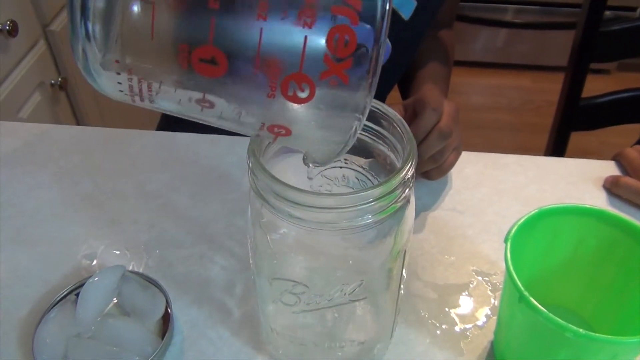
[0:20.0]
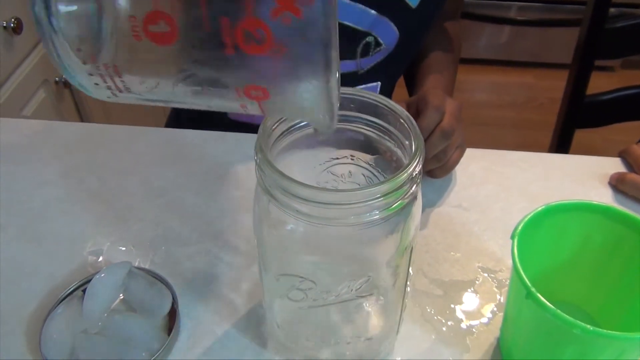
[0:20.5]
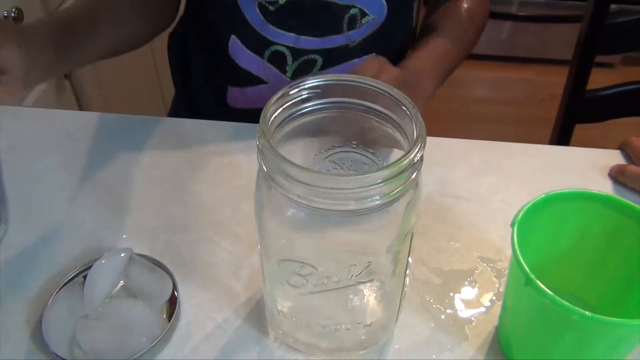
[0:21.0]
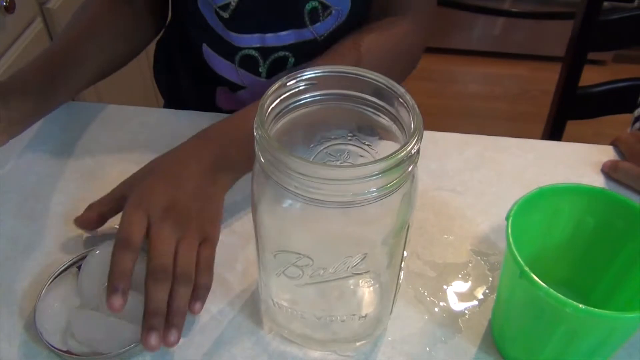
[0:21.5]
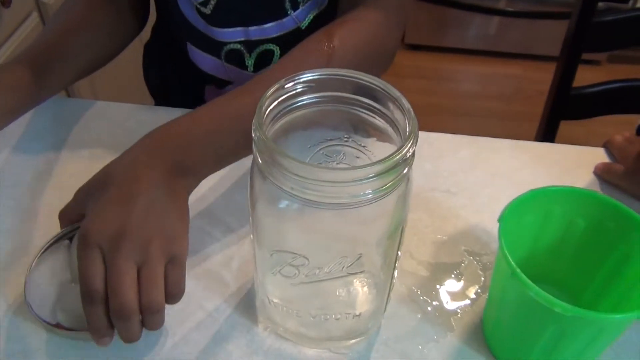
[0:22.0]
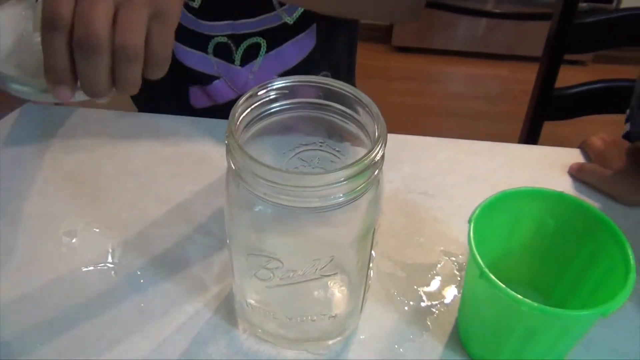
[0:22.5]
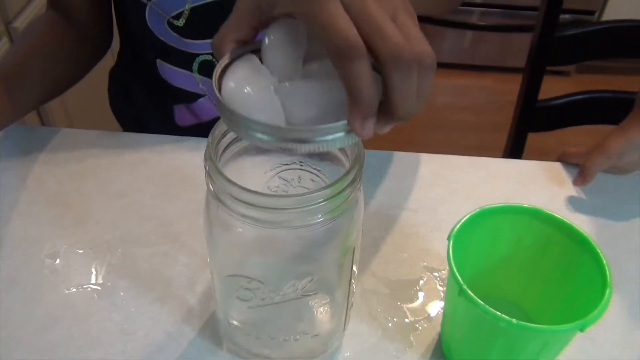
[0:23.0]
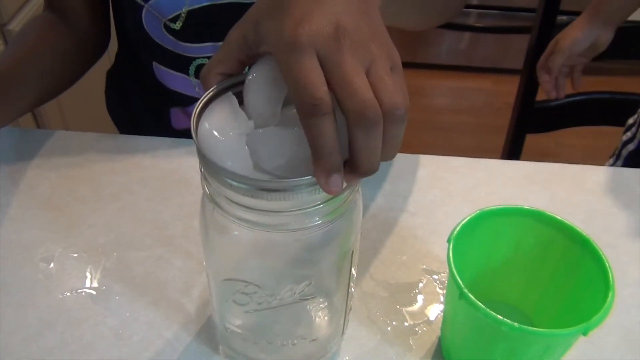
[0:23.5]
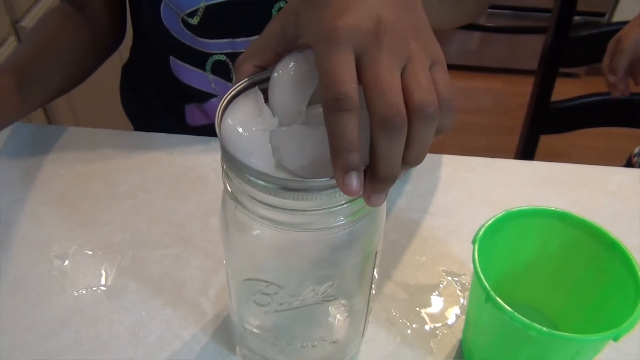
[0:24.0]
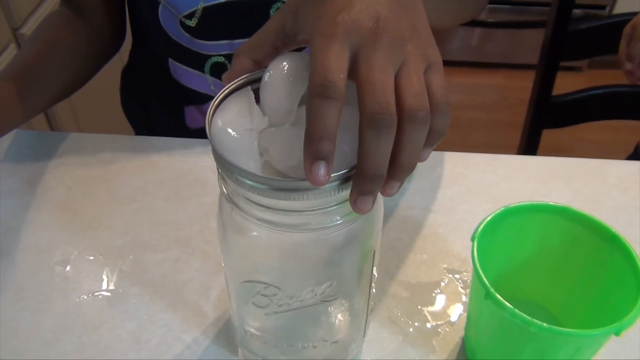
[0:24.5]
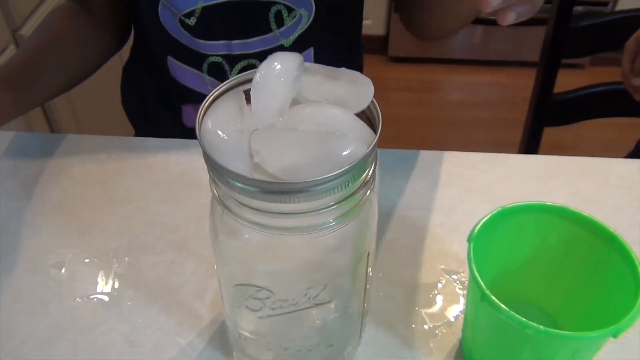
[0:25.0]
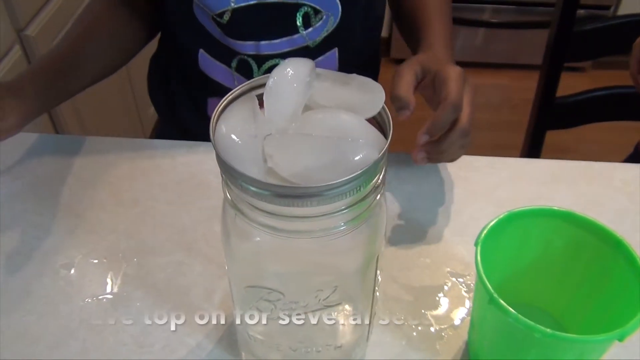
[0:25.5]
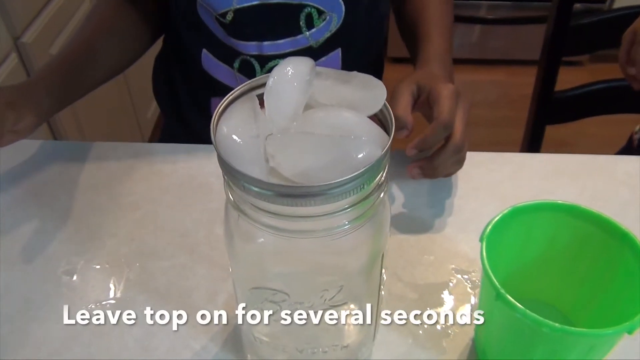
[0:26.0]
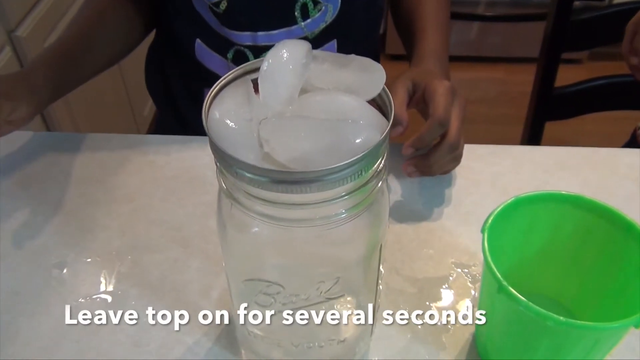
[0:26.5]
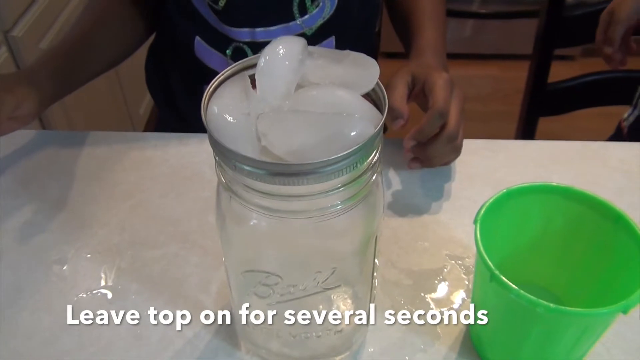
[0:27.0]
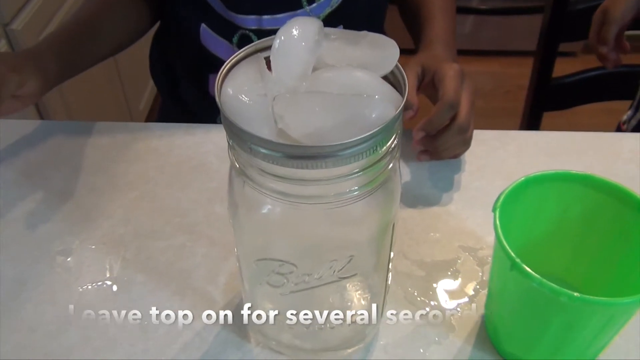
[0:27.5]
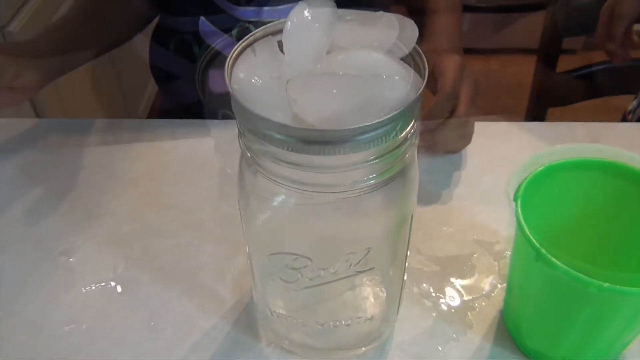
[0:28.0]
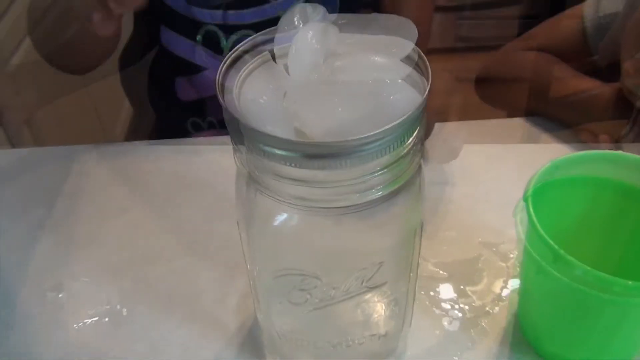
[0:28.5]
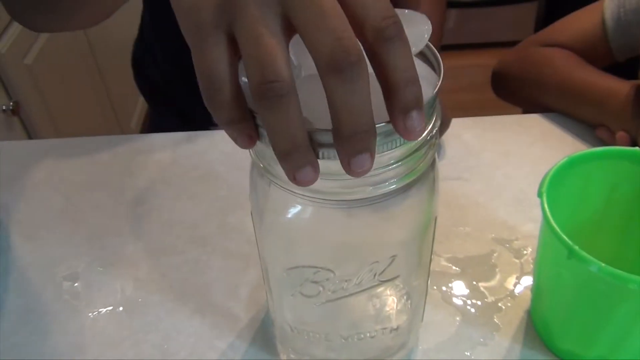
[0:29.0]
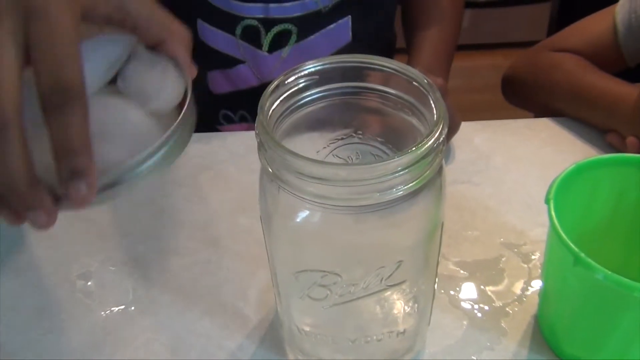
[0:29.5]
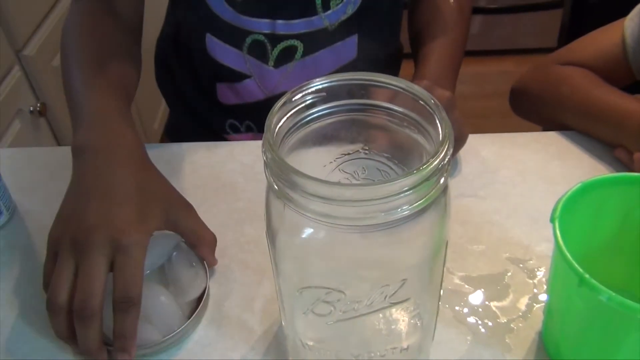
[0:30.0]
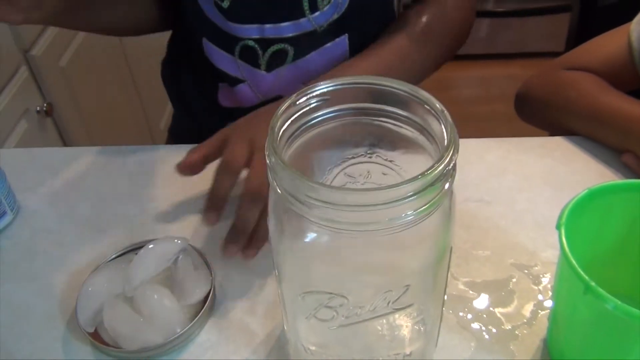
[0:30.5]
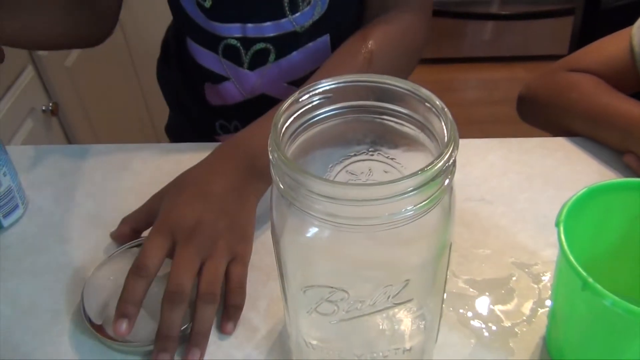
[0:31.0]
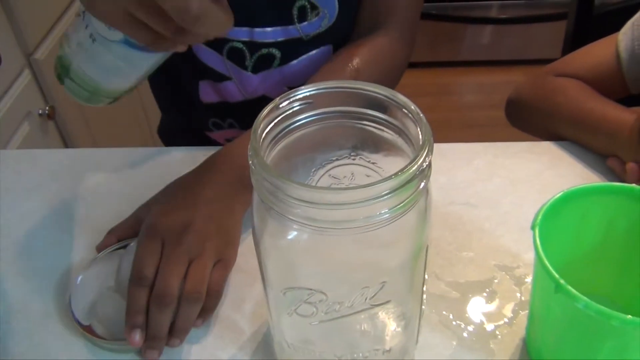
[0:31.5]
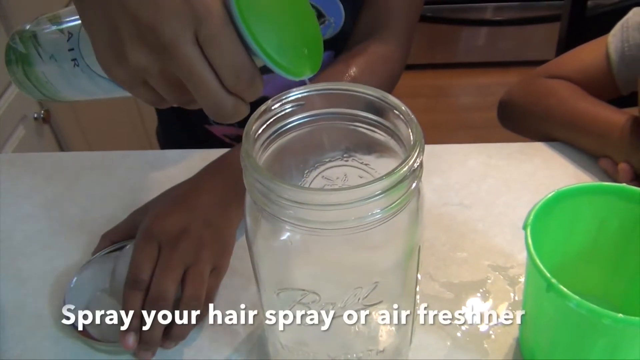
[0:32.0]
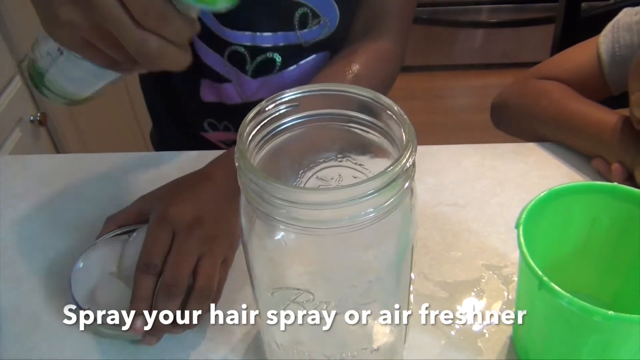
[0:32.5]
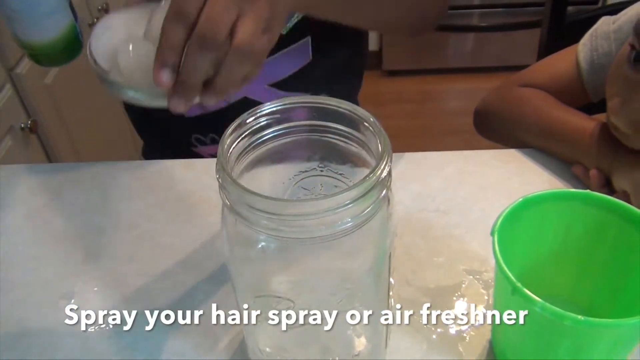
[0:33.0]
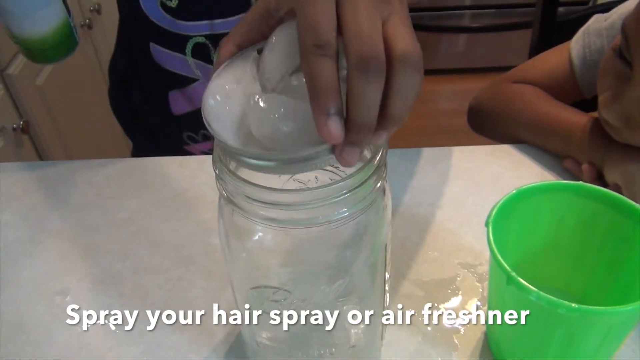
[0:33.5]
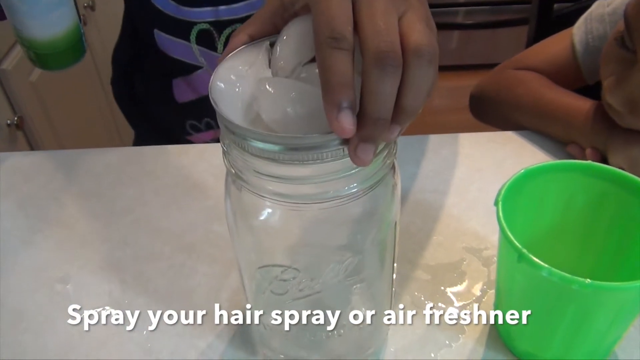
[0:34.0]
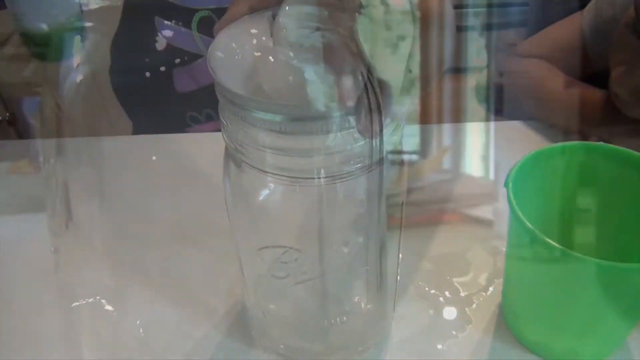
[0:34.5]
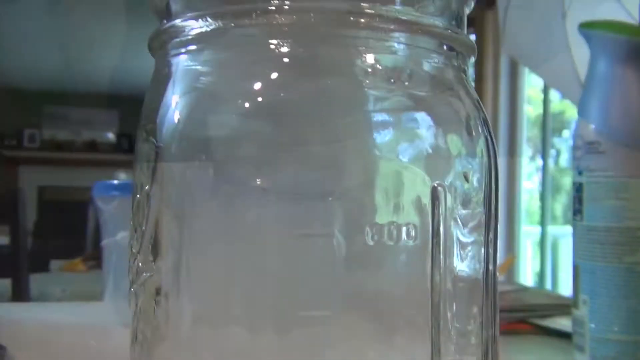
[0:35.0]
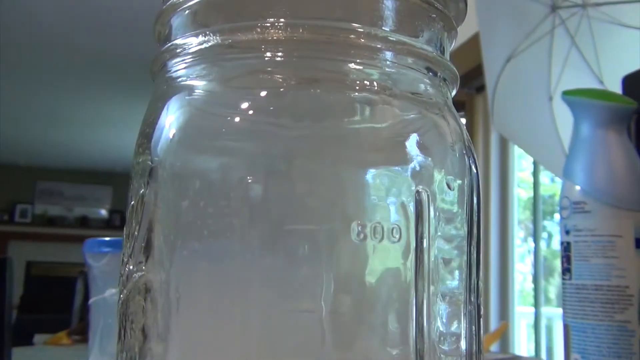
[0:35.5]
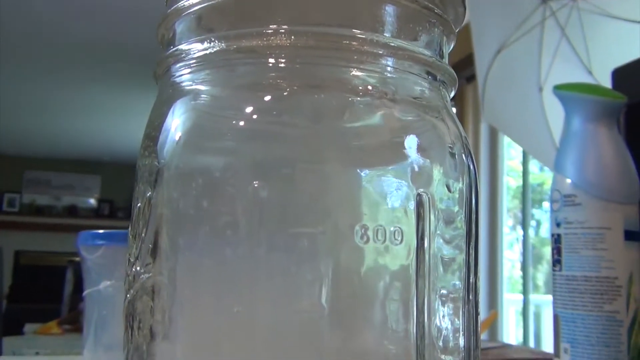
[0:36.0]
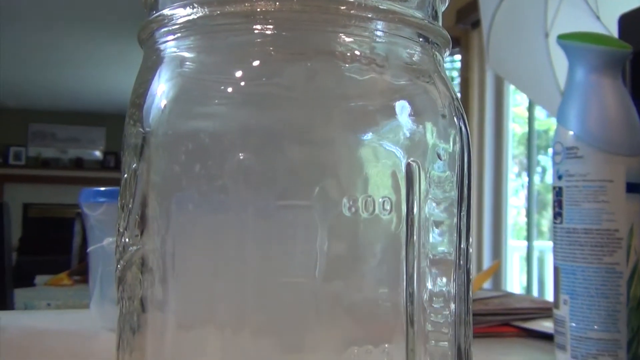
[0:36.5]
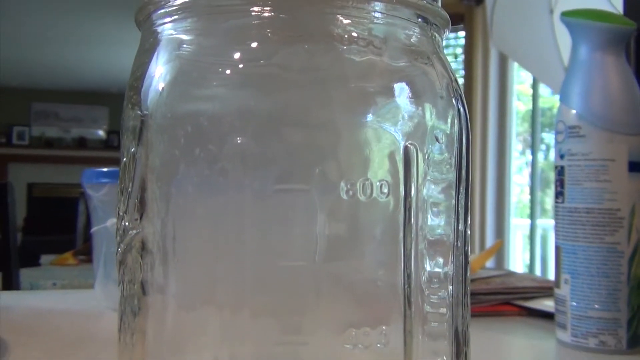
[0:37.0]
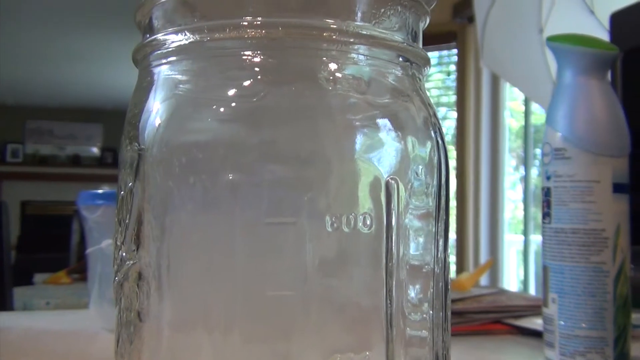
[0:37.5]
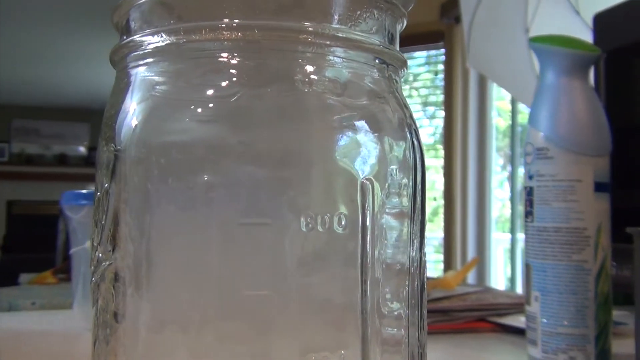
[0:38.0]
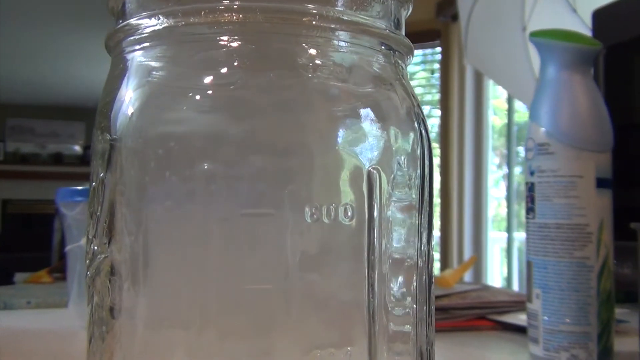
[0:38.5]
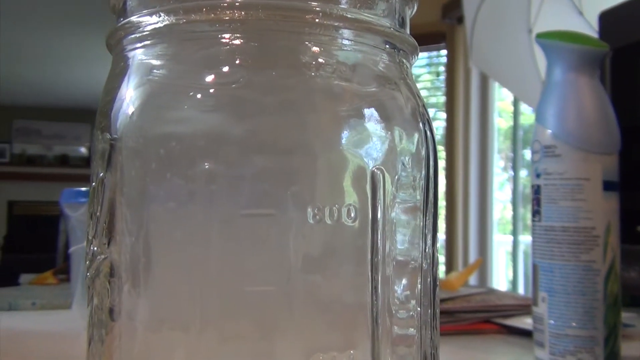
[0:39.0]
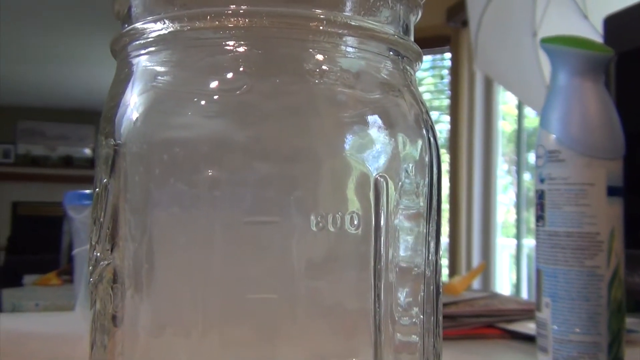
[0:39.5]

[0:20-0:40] After pouring the water into the glass jar, the girl puts the upside-down lid, with the ice cubes on top, right on top of the jar. White text appears at the bottom of the screen saying to leave it for several seconds. She then takes off the lid with the ice cubes, sprays some air freshener into the glass jar, and puts the lid back on, closing it. The camera pans to the side of the glass jar, showing a little of the living room in the back, which has a fireplace and a large patio door. Text says to wait for a few seconds until the next step of the experiment.